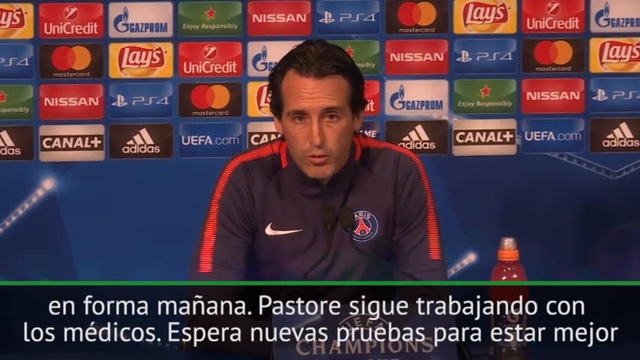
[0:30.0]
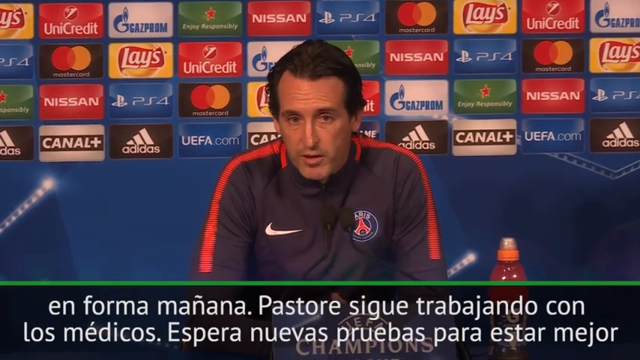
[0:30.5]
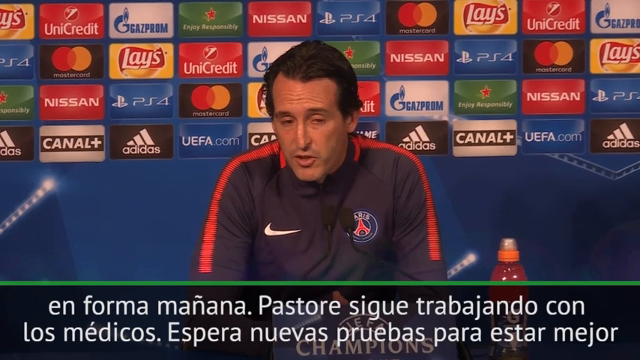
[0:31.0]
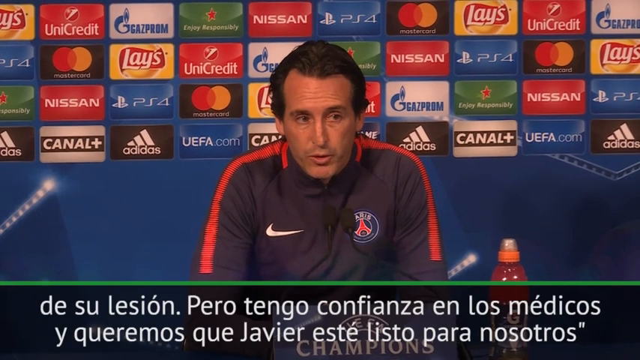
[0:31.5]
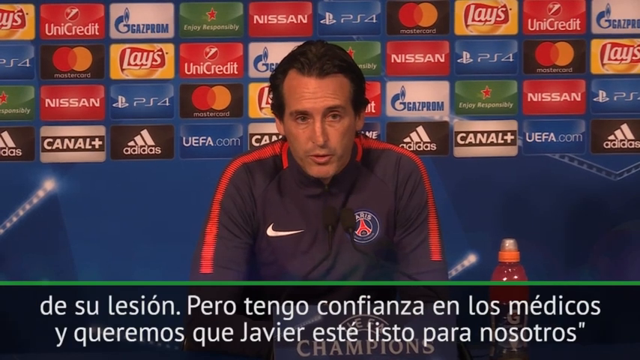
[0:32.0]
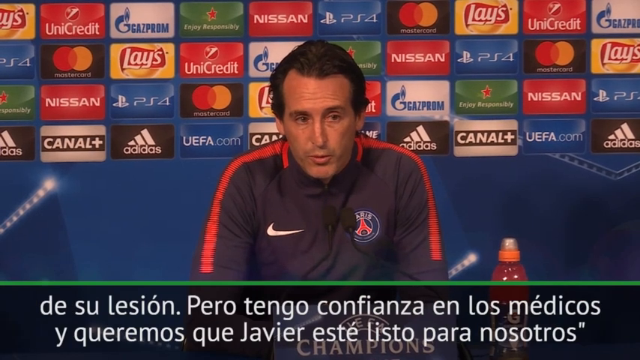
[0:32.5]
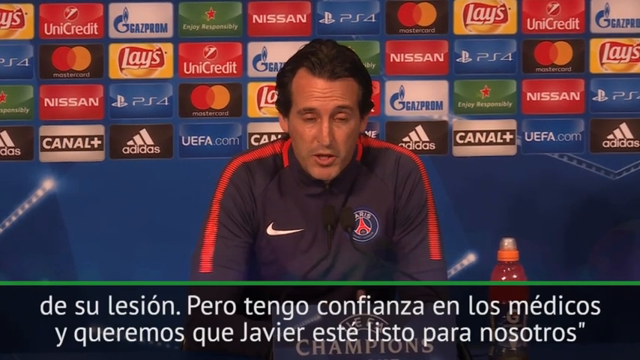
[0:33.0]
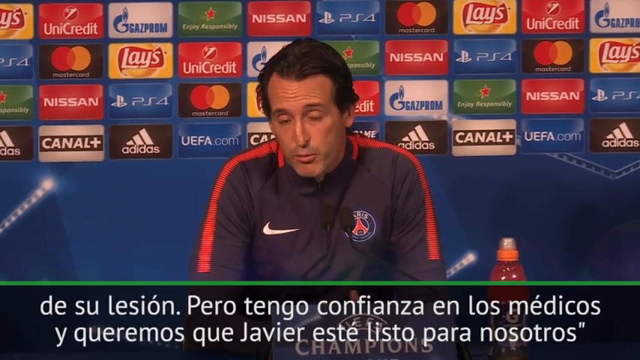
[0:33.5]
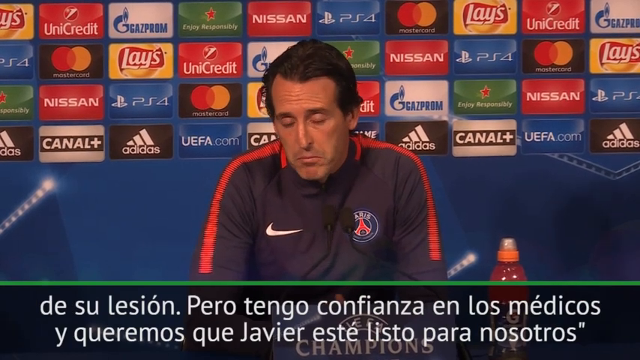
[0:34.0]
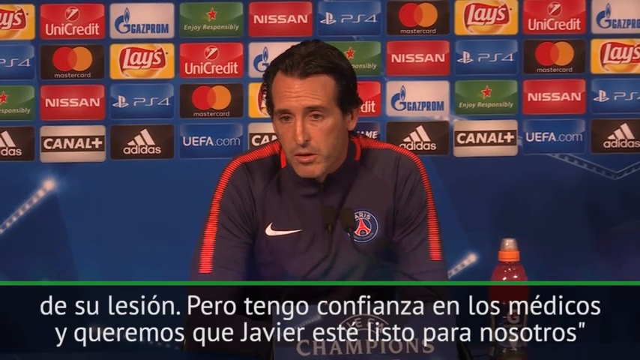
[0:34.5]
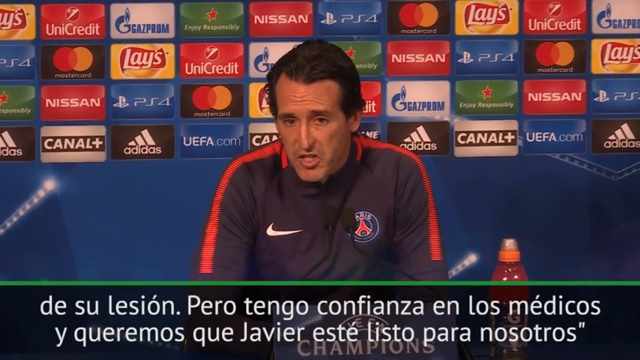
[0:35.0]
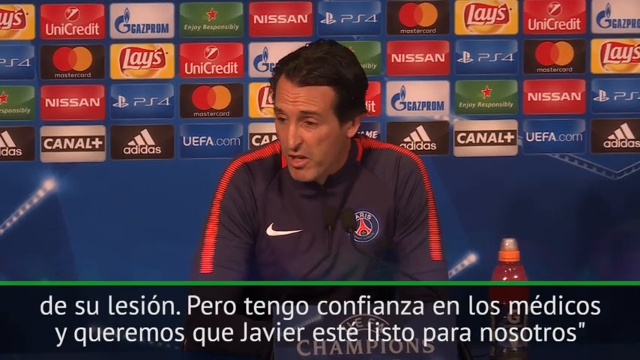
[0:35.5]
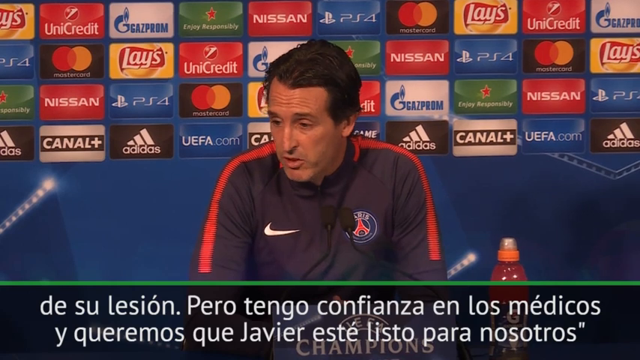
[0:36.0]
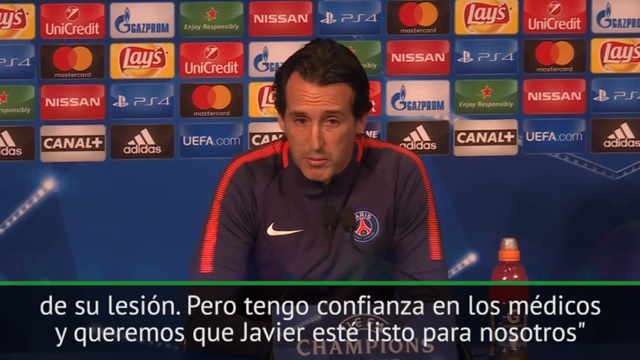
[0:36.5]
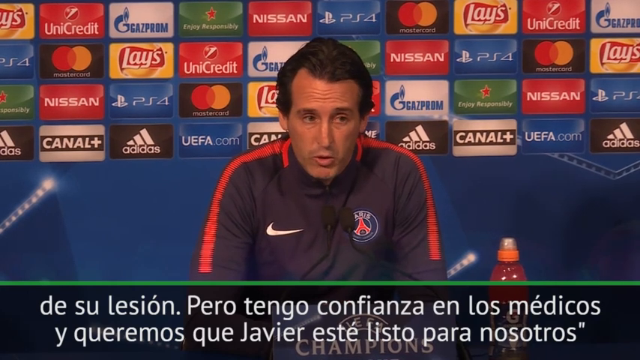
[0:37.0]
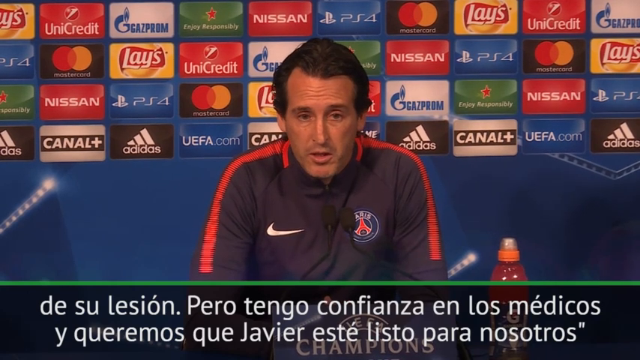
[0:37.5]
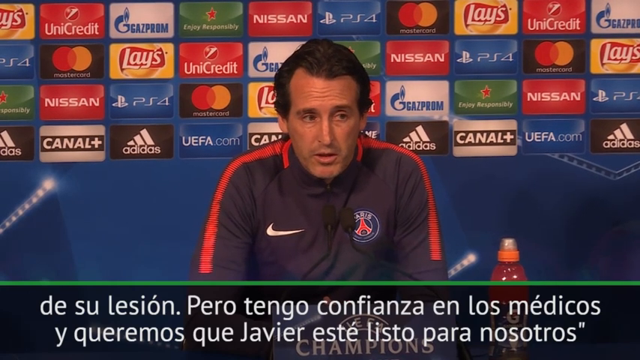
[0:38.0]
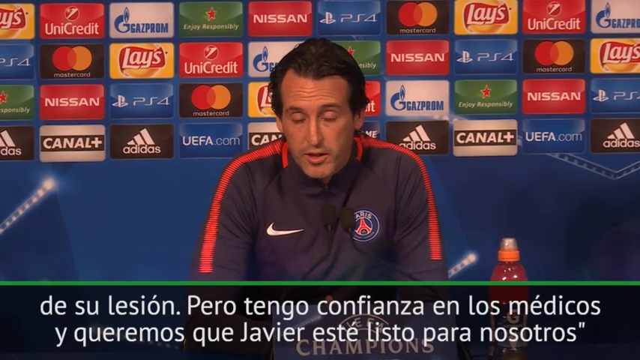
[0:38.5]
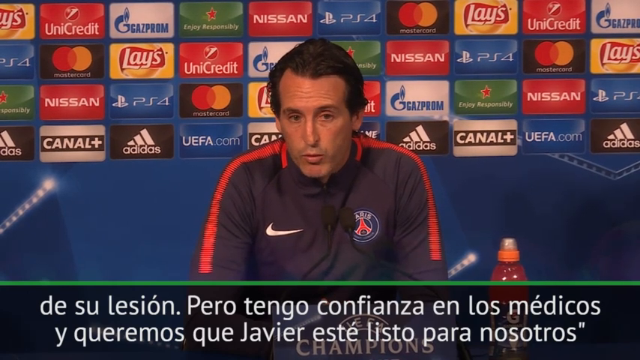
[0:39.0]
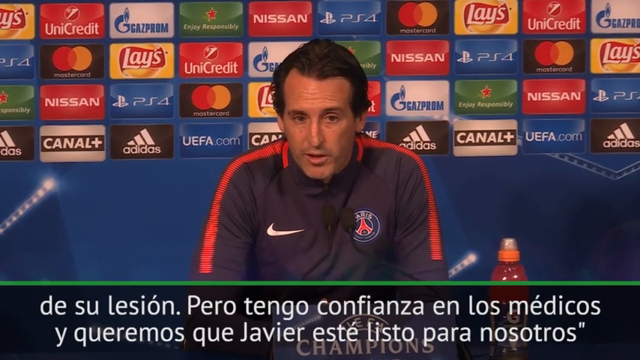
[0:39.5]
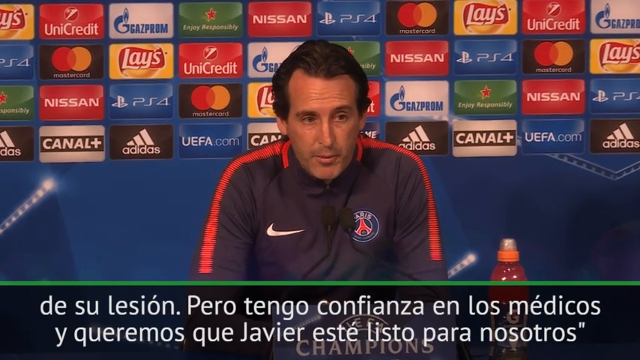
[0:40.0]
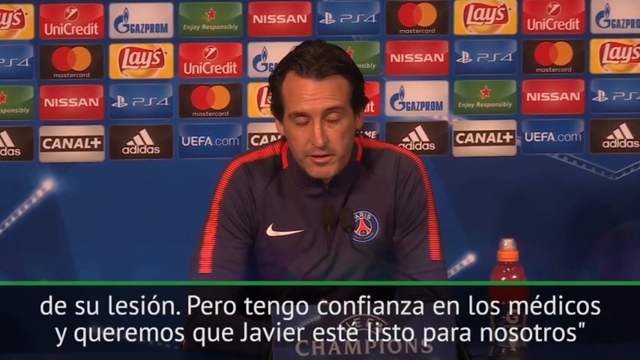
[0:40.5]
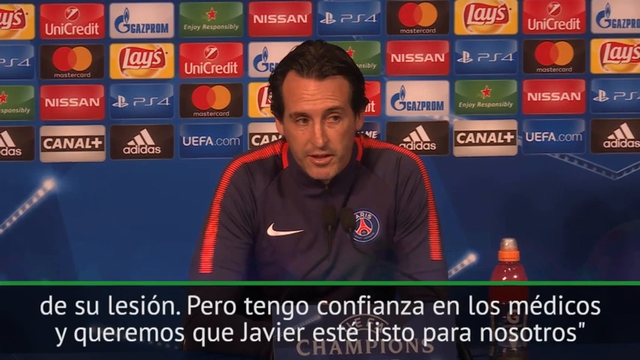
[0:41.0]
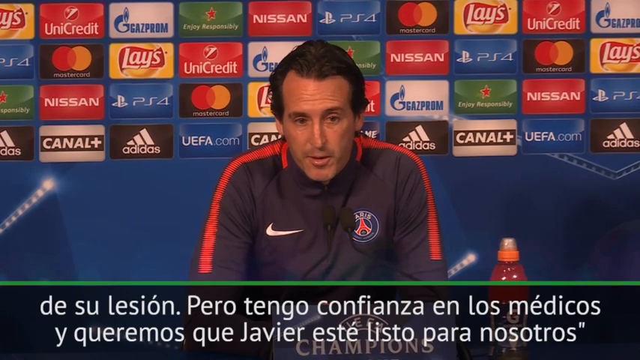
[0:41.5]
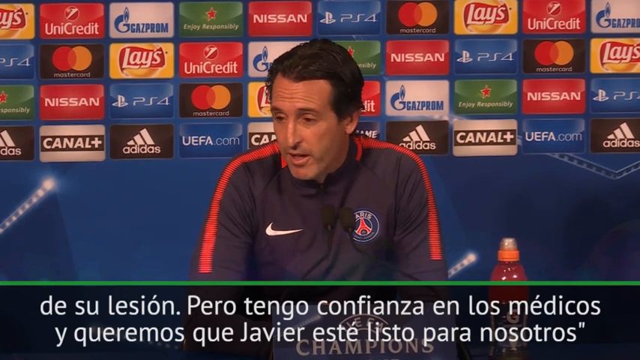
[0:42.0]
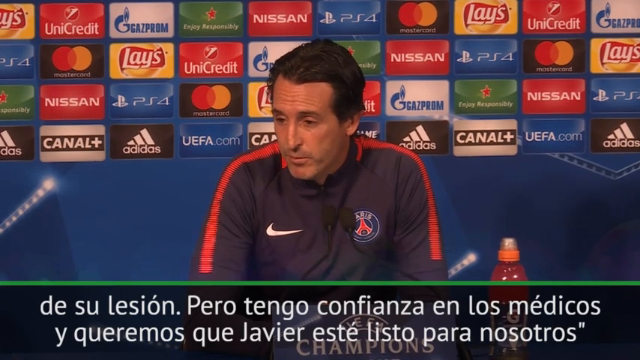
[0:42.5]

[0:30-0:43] The man sits at a desk or table in front of a wall with lots of major national brands, including Lays, MasterCard, Adidas, Nissan and PS. He is speaking, not in English, while looking at the camera, apparently addressing whoever is in front of him, maybe a group of people. He wears a kind of athletic jacket with the Nike logo on it and another, unidentifiable patch on the opposite side. He has dark hair and looks to be possibly in his 30s or early 40s. On the table or desk next to him is a bottle that looks filled with some type of red liquid, possibly a fruit drink or a hydrating drink.